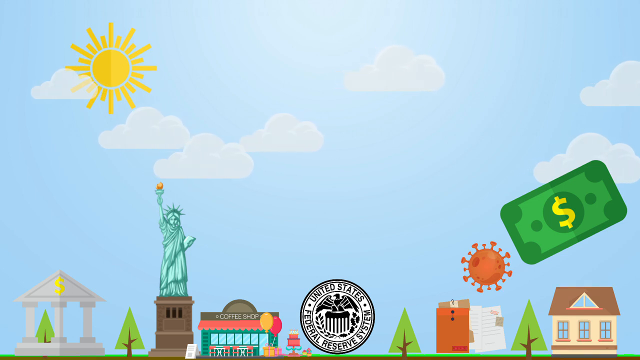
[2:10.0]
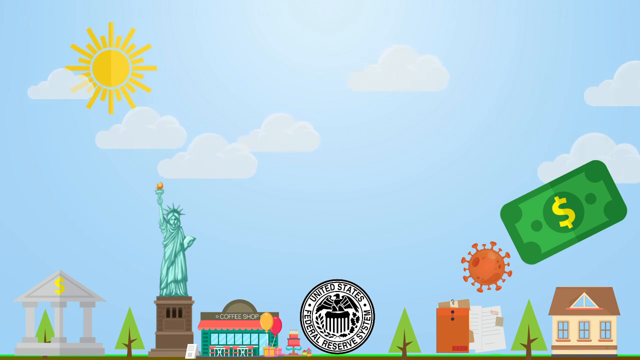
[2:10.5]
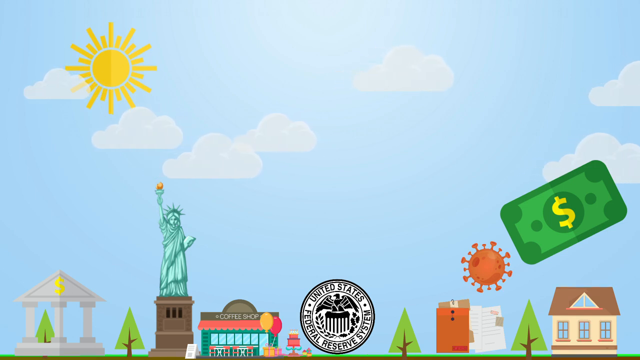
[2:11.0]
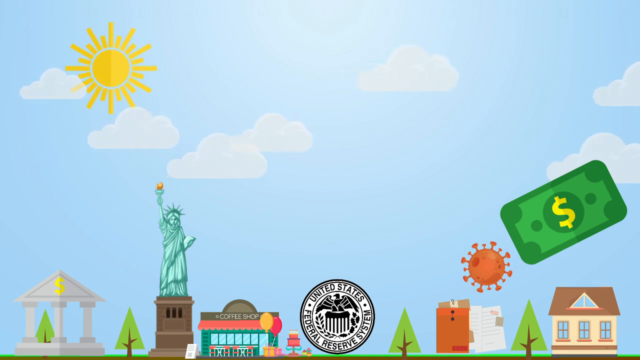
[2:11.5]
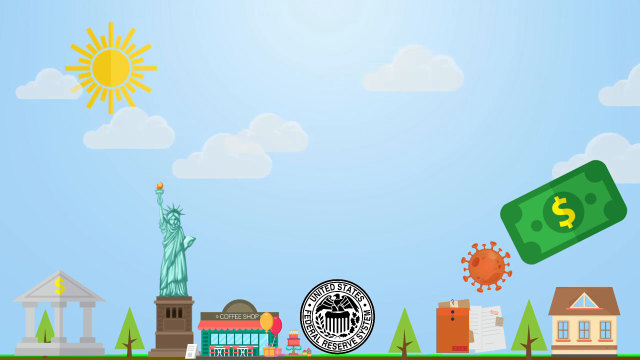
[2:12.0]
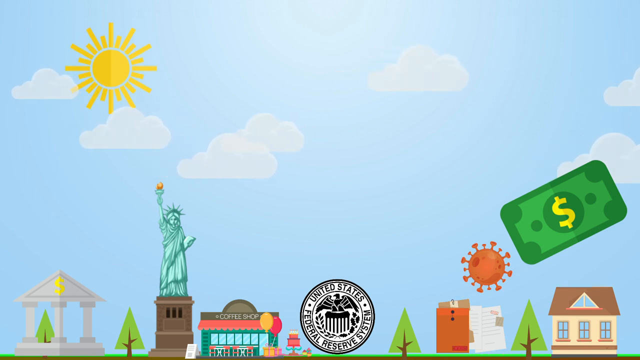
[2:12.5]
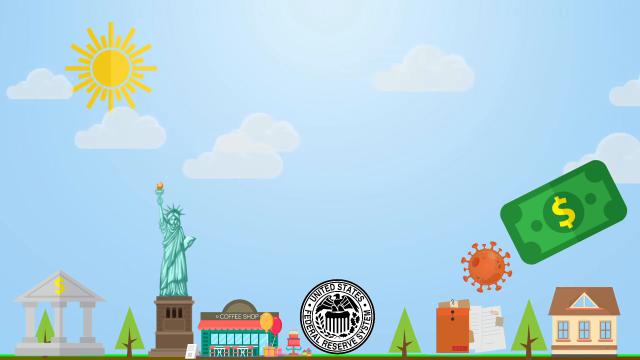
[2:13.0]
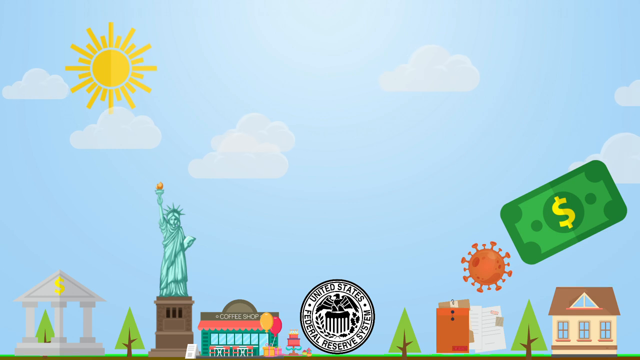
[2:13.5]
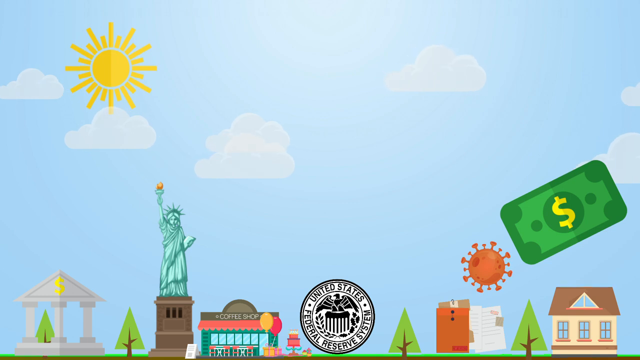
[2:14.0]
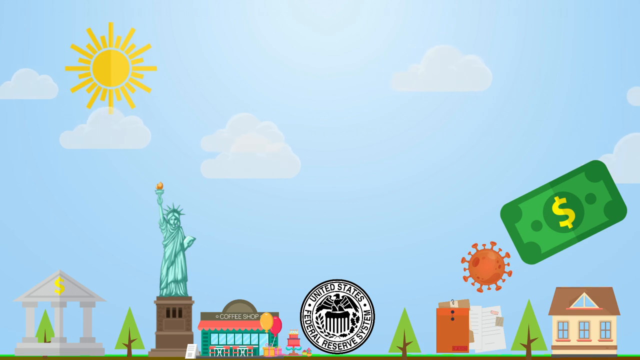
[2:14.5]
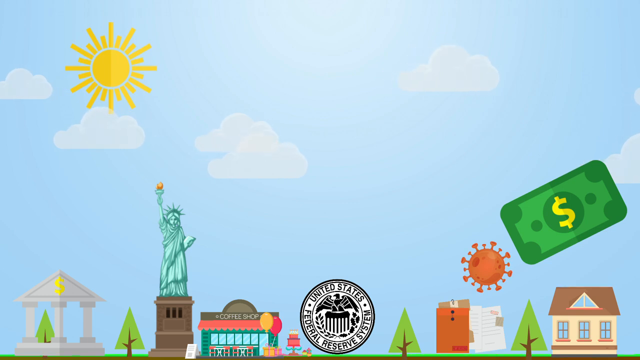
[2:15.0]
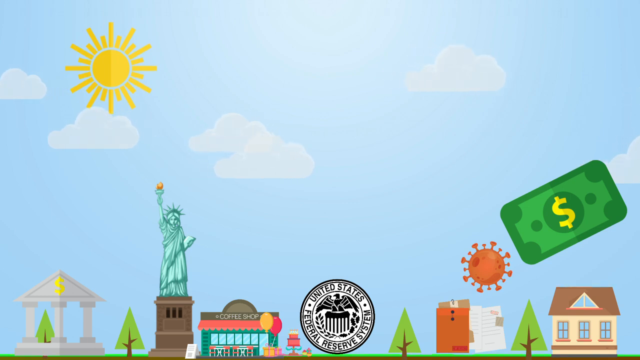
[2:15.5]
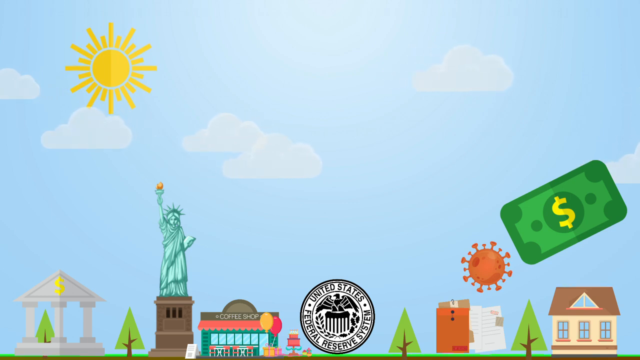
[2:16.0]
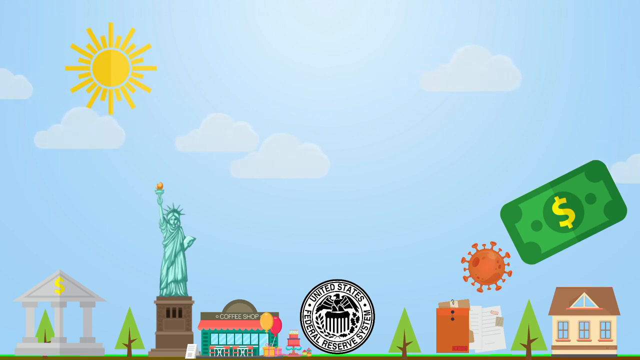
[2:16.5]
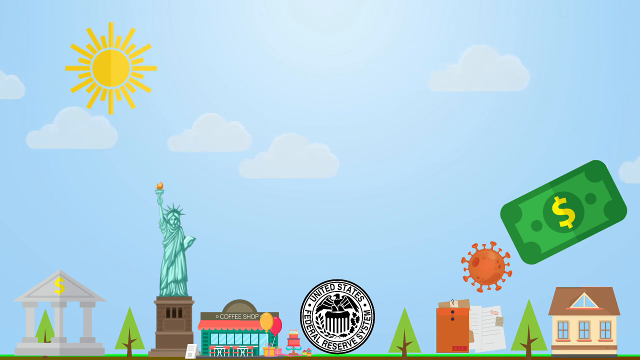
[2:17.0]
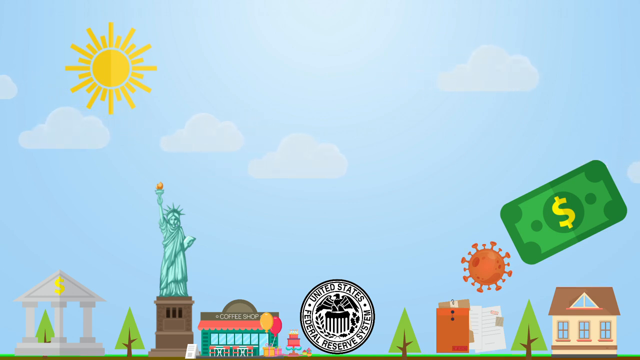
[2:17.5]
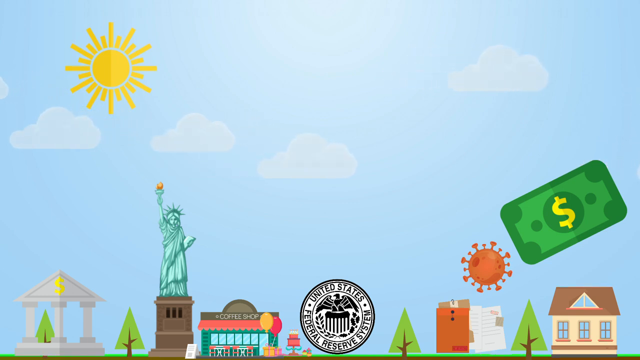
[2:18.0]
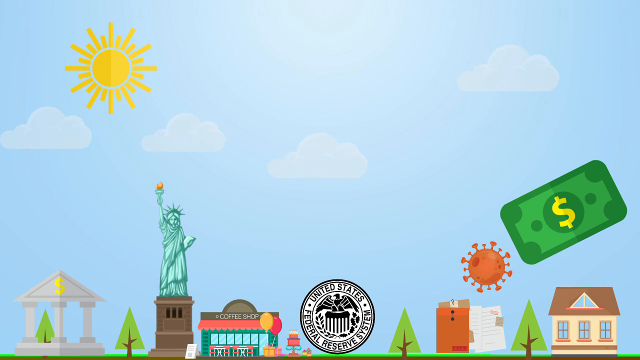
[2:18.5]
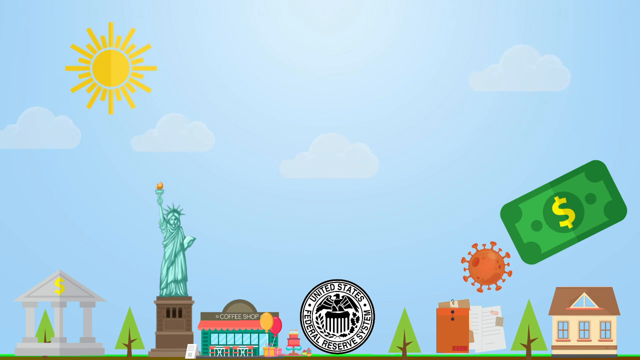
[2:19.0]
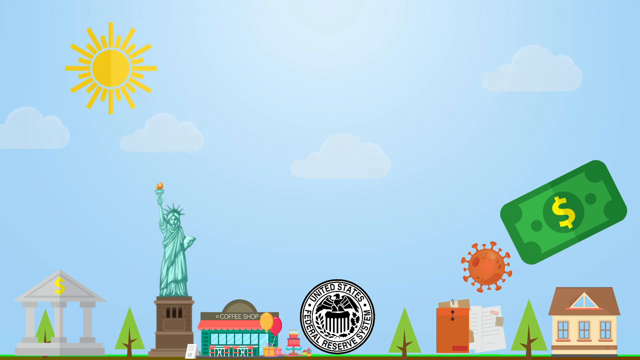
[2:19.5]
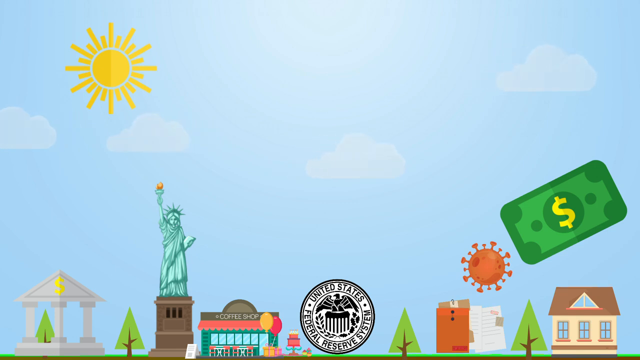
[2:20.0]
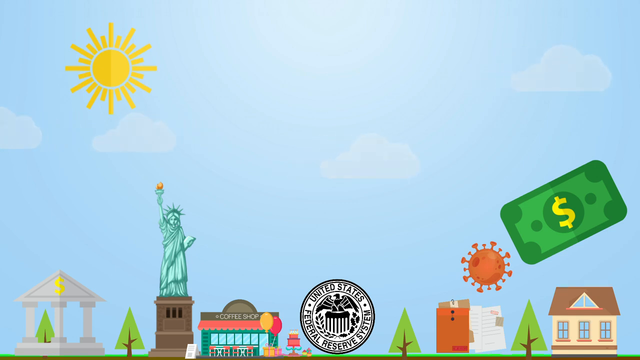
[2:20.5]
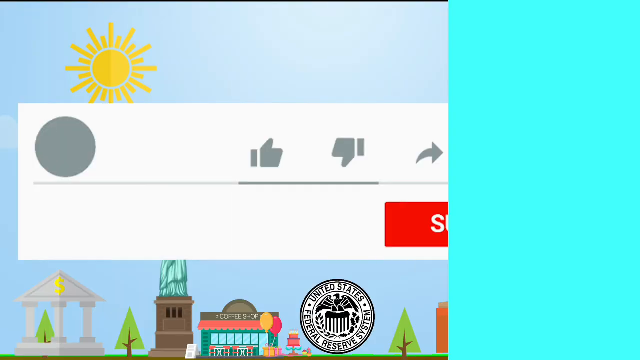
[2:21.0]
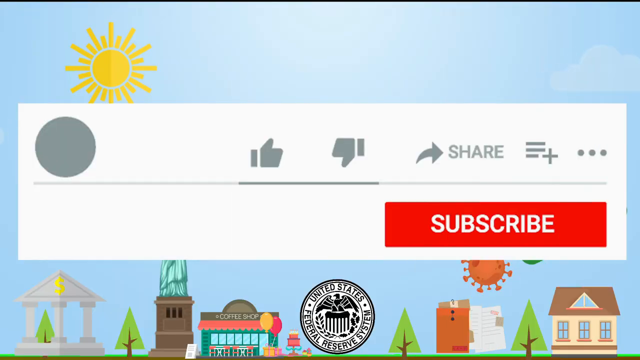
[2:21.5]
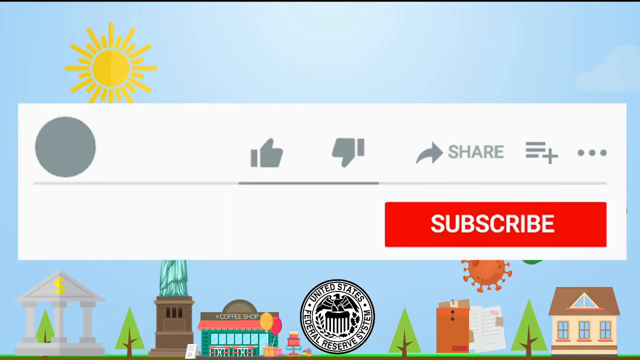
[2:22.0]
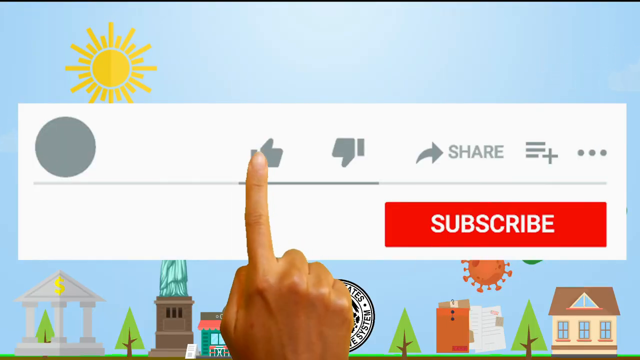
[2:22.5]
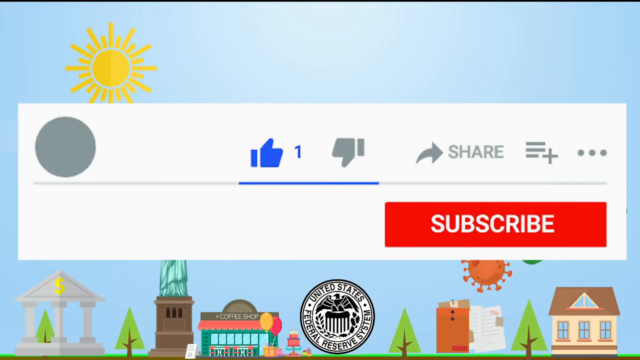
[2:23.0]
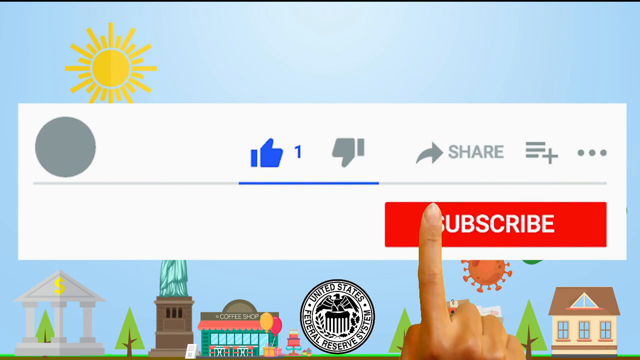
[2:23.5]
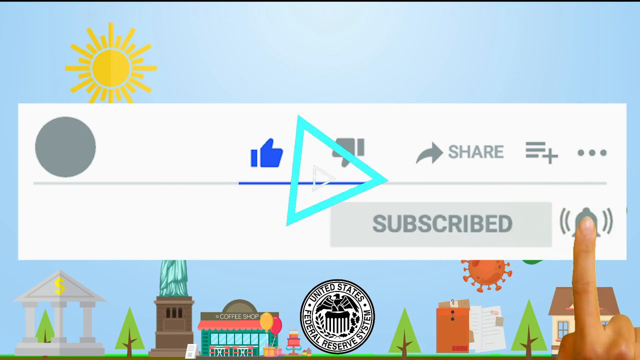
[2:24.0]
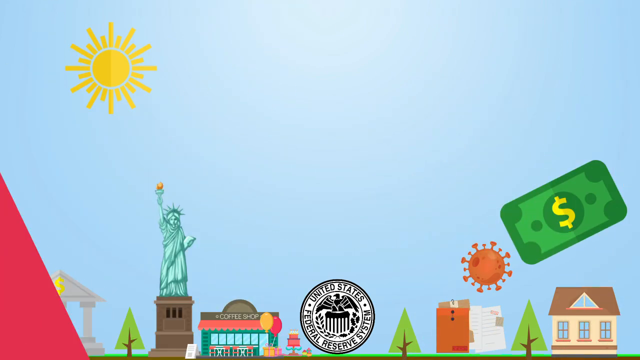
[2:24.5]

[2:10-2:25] The light blue sky is shown with the sun, which is dark gold on its left part and light gold on its right part. Seven fairly white clouds move from left to right and right to left. At the bottom of the screen is the Statue of Liberty with one hand stretched up holding a torch whose flame is a mix of red and yellow; the statue has a crown, holds a book in the other hand, is colored green and stands on a dark brown mount. The United States Federal Reserve System emblem, in a mix of white and navy, is next to the statue. Next to the emblem is a dossier with an orange back cover and a touch of brown. There are also a couple of green pine trees with brown branches, and a brown building with an attic and three windows.